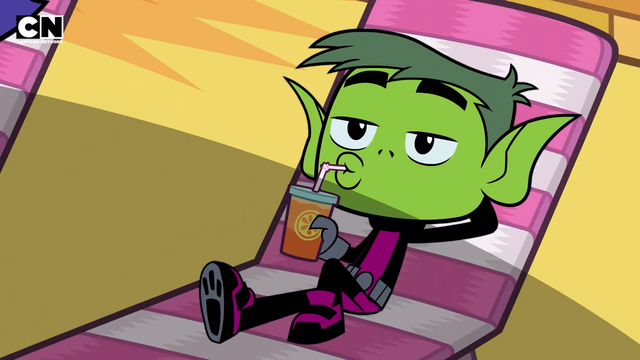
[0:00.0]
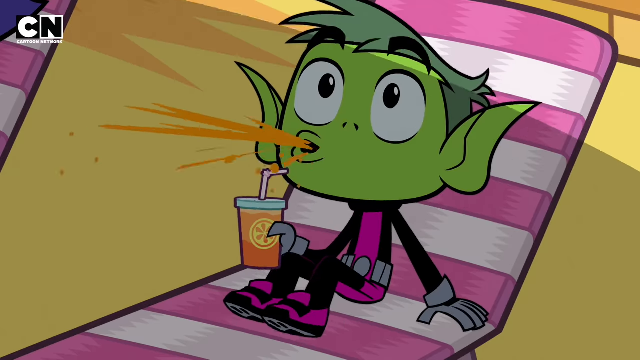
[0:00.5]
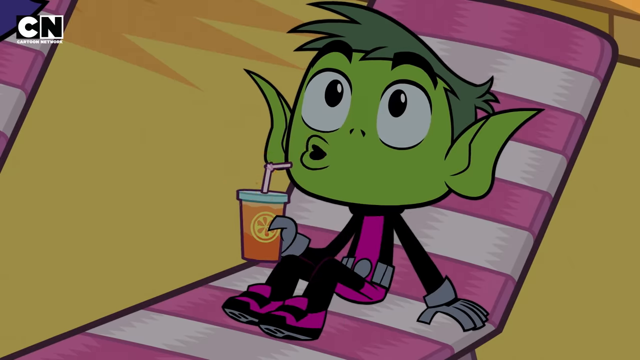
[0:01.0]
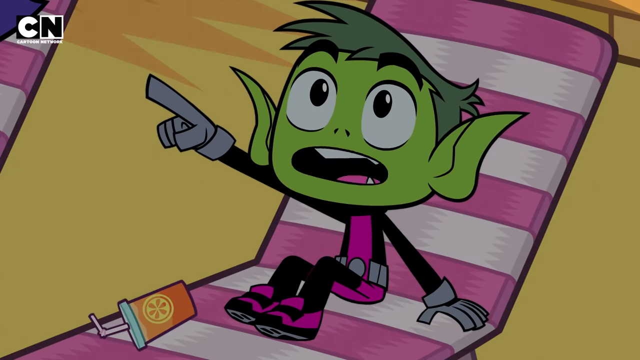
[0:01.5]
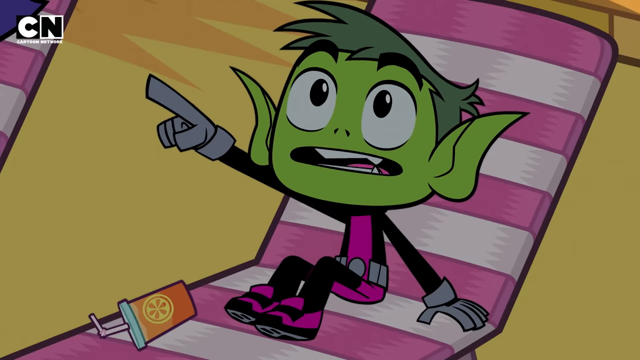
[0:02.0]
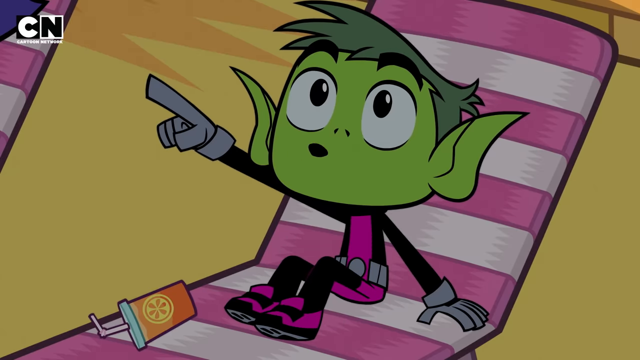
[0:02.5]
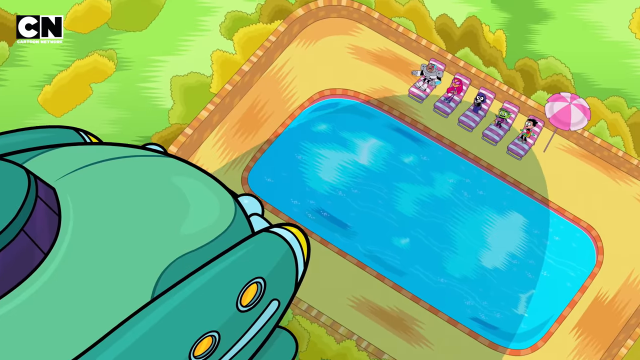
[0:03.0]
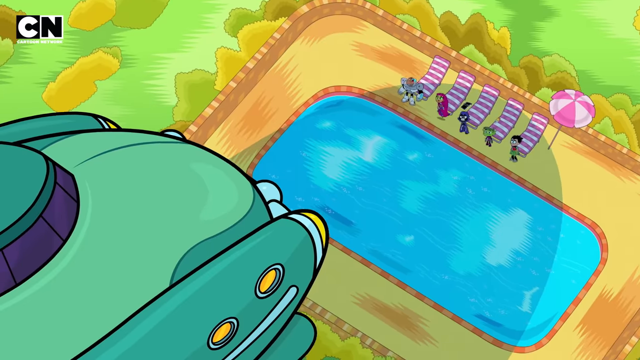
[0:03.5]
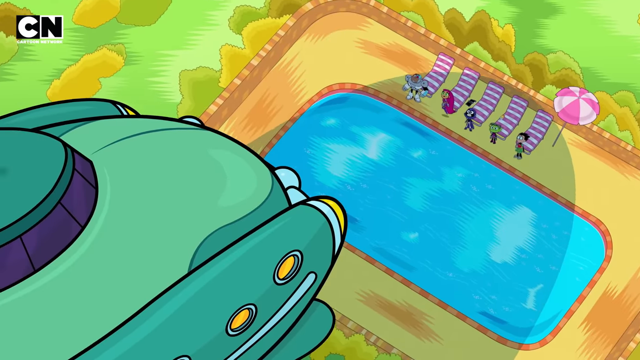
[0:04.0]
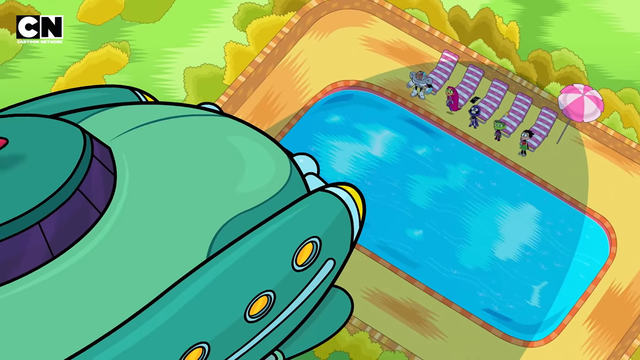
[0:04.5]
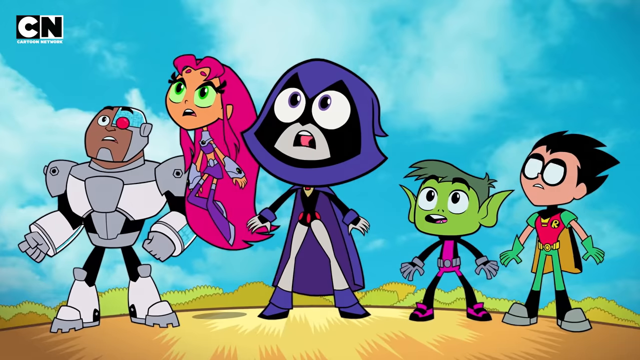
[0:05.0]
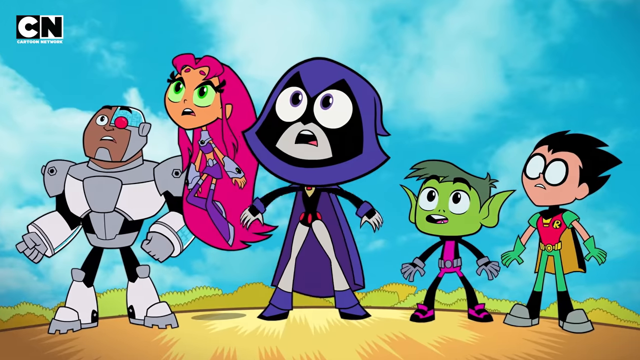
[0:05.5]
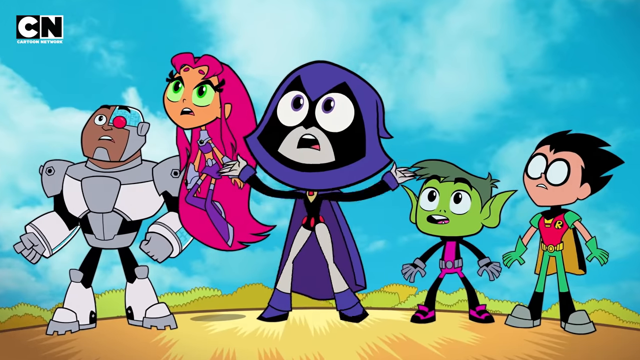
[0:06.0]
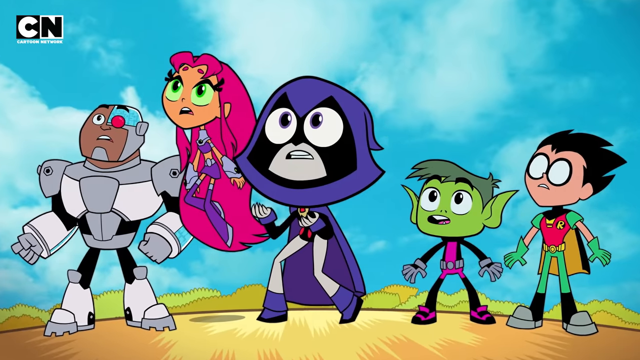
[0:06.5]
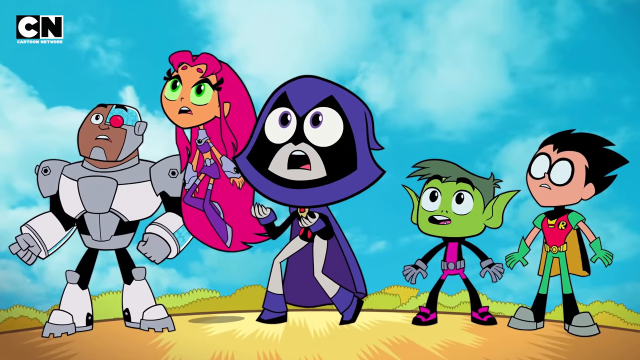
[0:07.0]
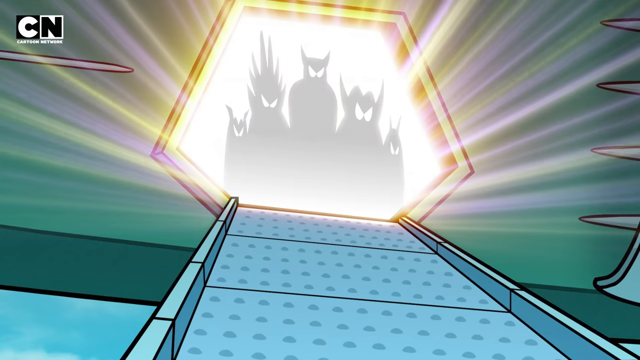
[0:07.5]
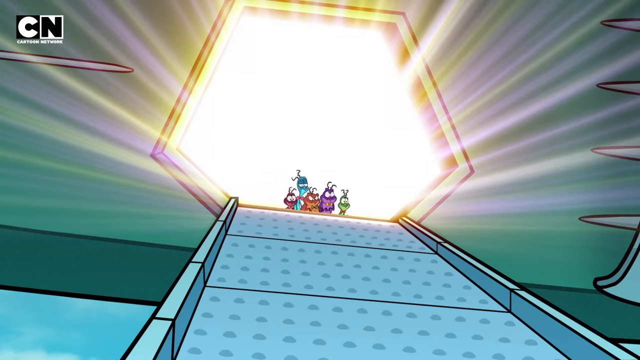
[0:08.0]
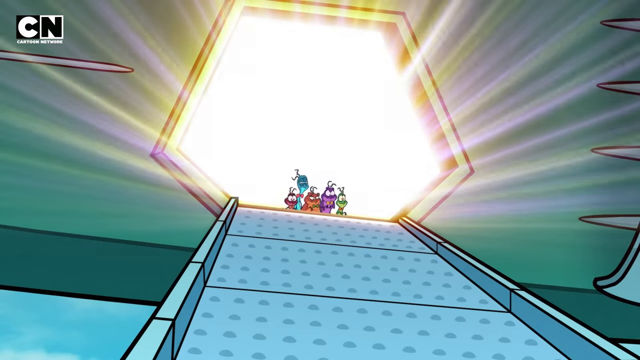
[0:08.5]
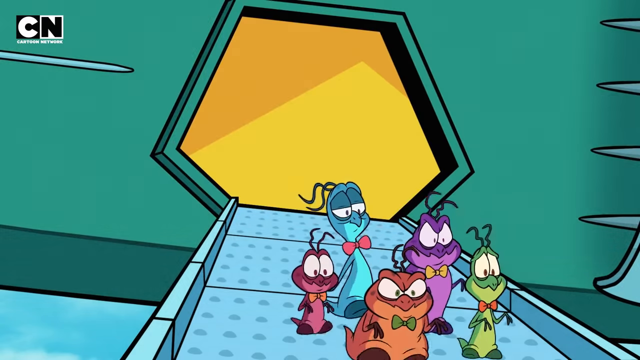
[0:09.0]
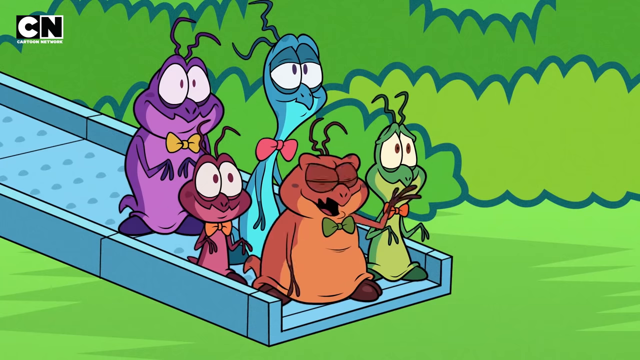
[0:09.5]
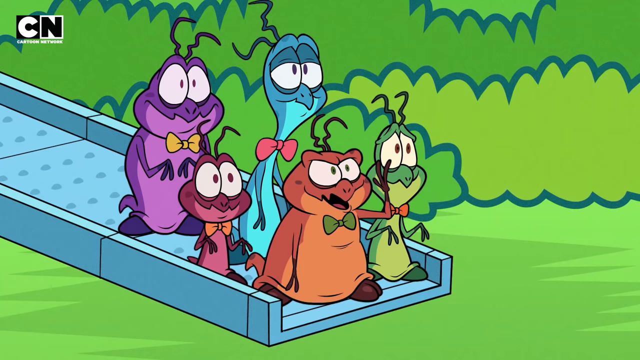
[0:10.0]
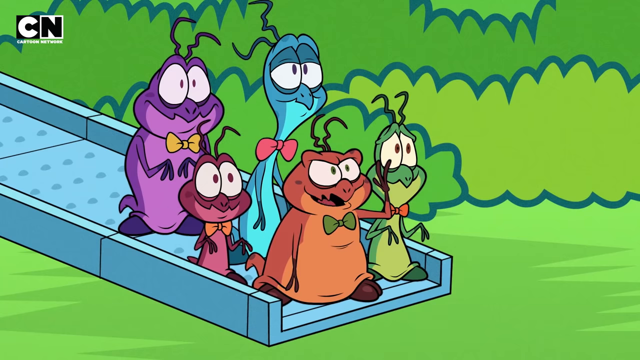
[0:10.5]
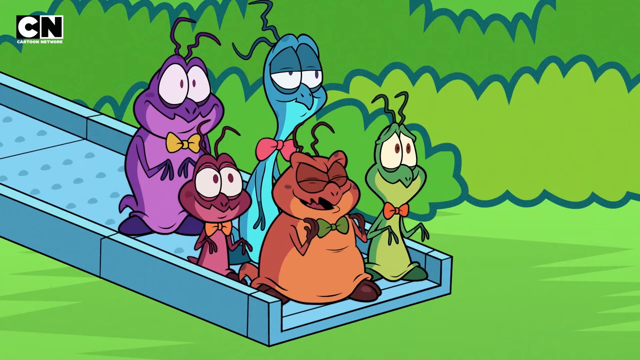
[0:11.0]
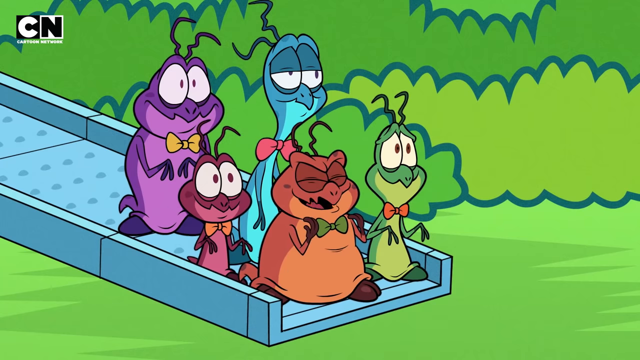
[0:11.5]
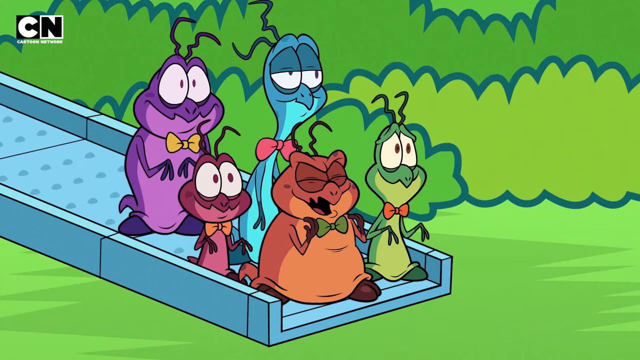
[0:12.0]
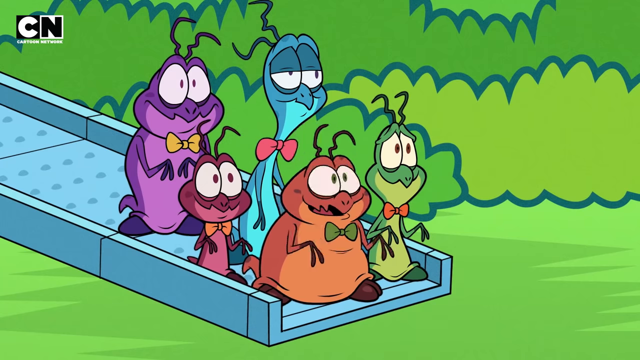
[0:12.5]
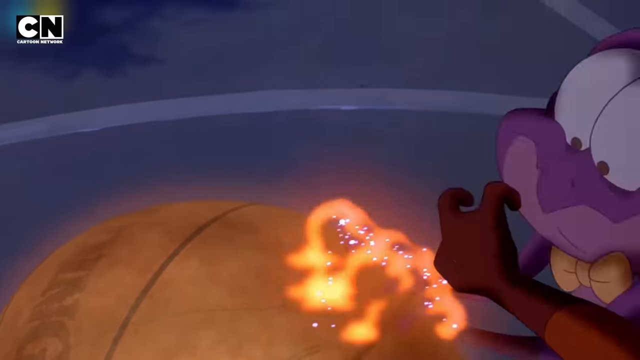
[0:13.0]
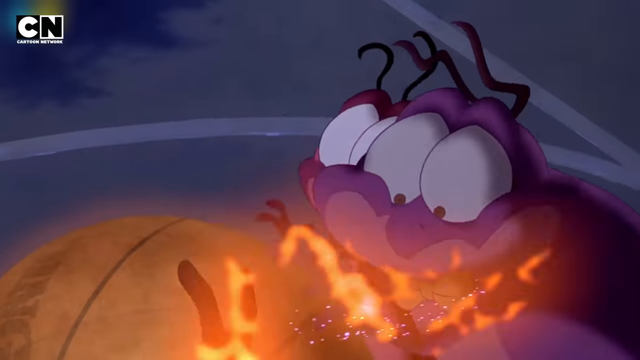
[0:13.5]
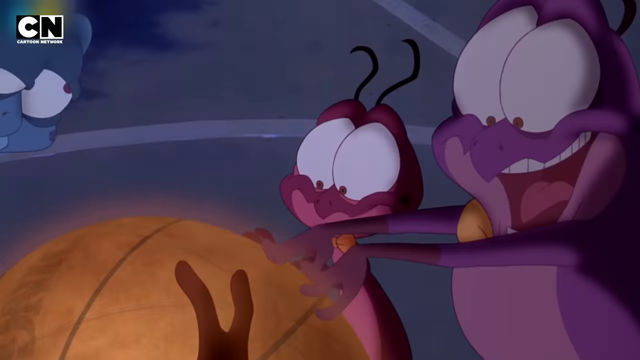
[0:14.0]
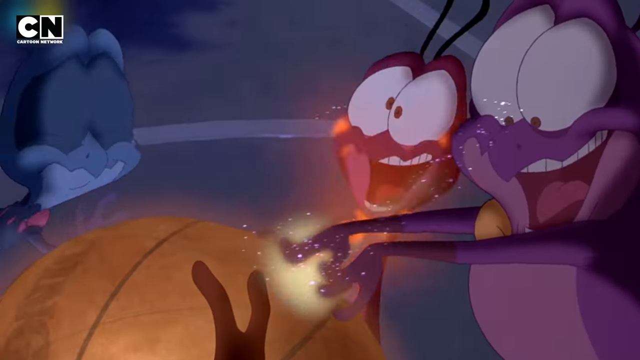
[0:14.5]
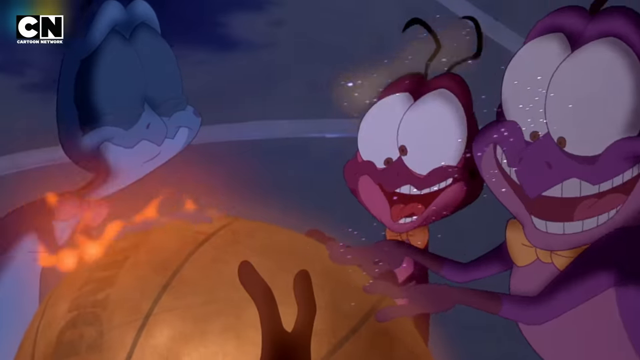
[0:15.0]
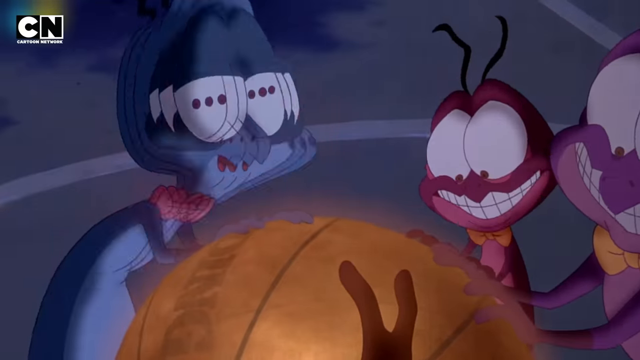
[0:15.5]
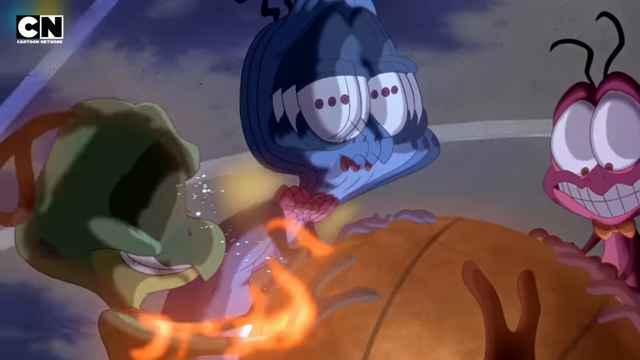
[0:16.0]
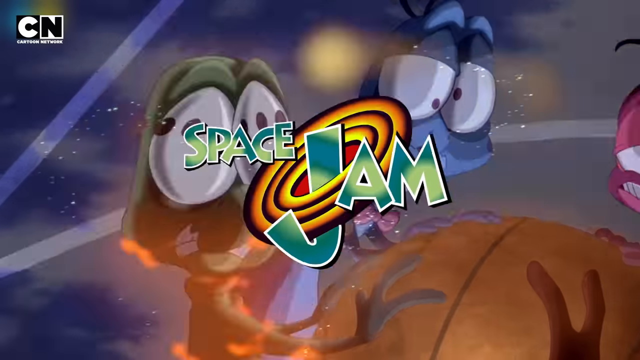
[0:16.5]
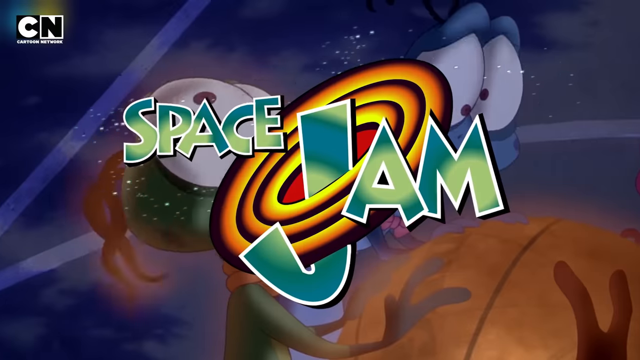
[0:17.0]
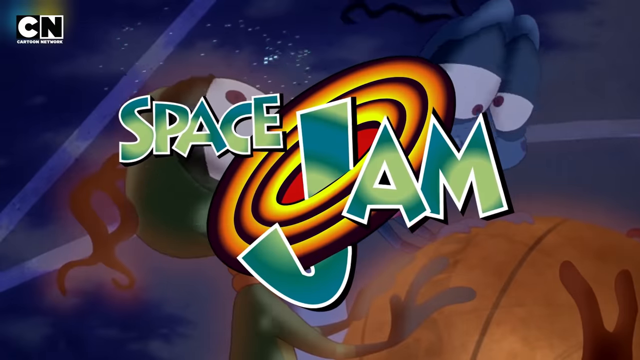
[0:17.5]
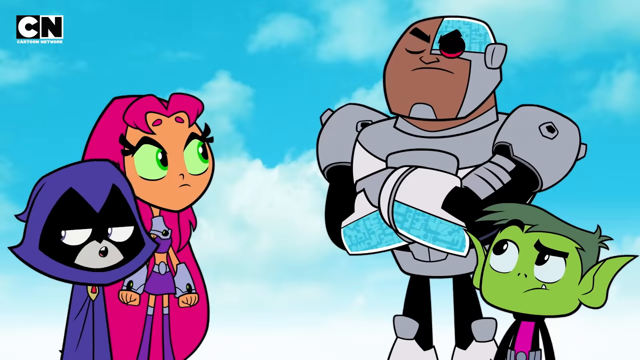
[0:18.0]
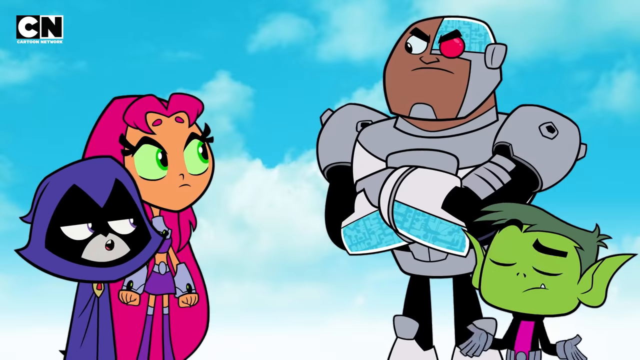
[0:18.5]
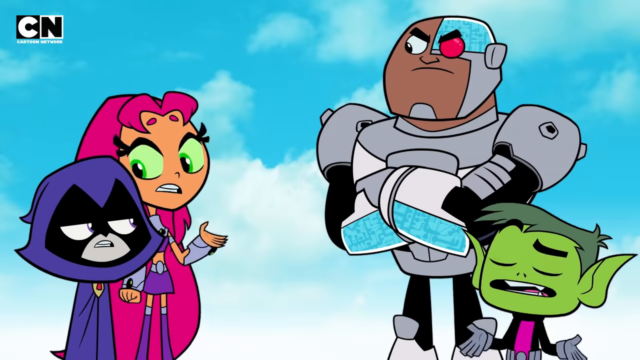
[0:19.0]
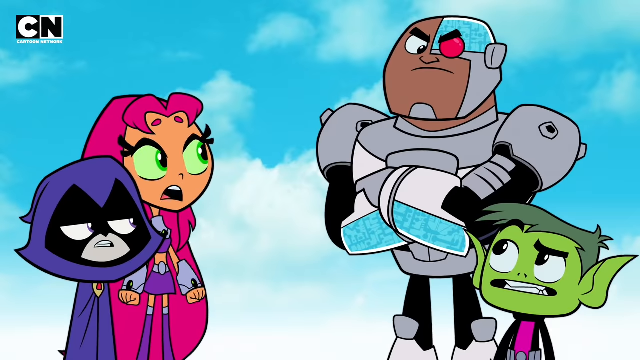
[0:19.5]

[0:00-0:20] In this Cartoon Network cartoon, the CN Cartoon Network logo appears in the upper left corner. Five little cartoon characters sit on beach chairs; one of them is green with pointy ears. The characters look like a mix of superheroes: one looks like Robin from Batman, one in the middle wears a purple cape and hood, a girl with long pink hair is floating, and another looks partly robotic, with a robot body and half of his face covered in metal. They look up at the sky and see a spaceship approaching over the swimming pool. The spaceship's hatch opens and five little characters that look slightly like bugs come out. They are different colors, and some have bent antennas. They come down a ramp, and one of them waves and starts speaking to the group. The same little creatures then appear to be inside the spaceship, all touching a glowing circle in the middle of a room. The title "Space Jam" appears on the screen.